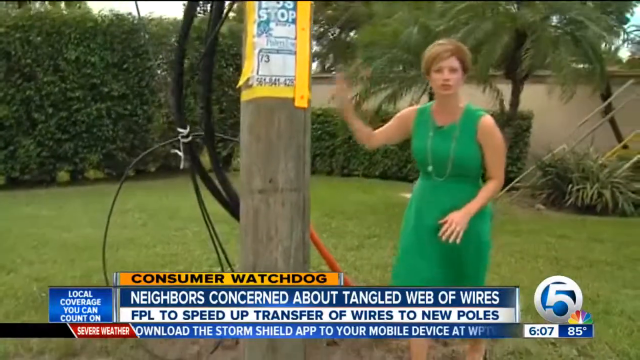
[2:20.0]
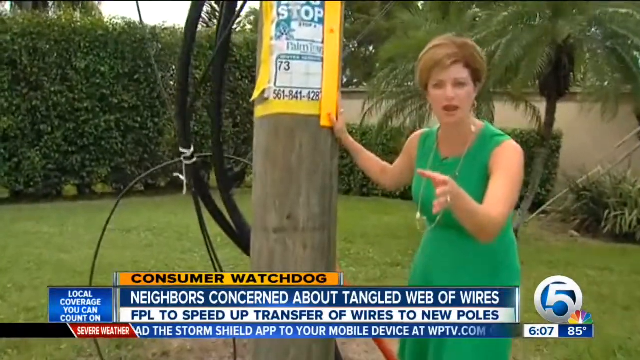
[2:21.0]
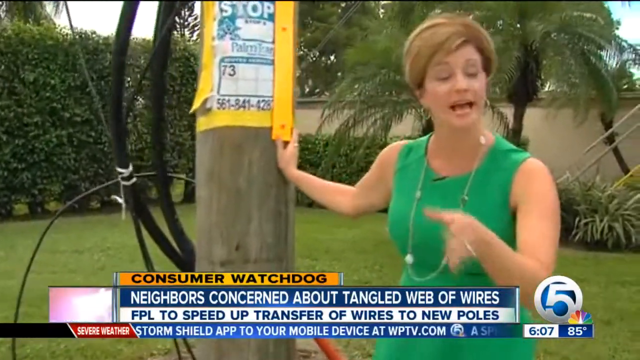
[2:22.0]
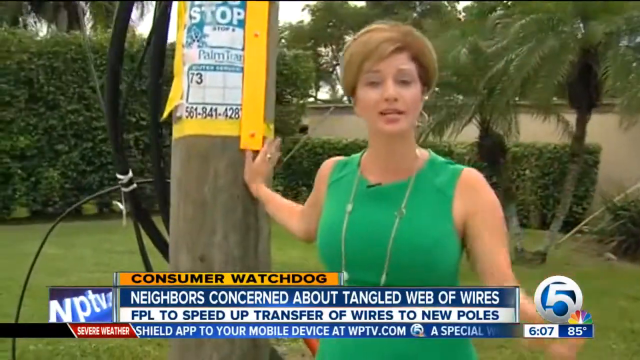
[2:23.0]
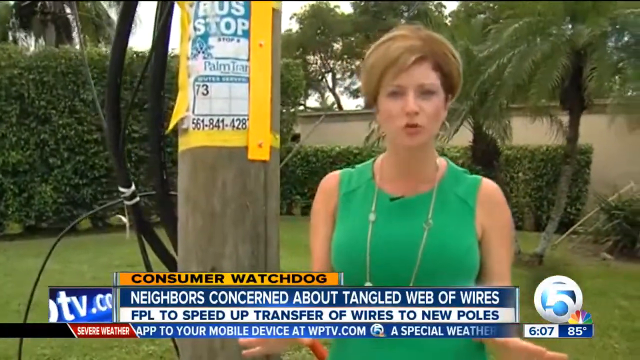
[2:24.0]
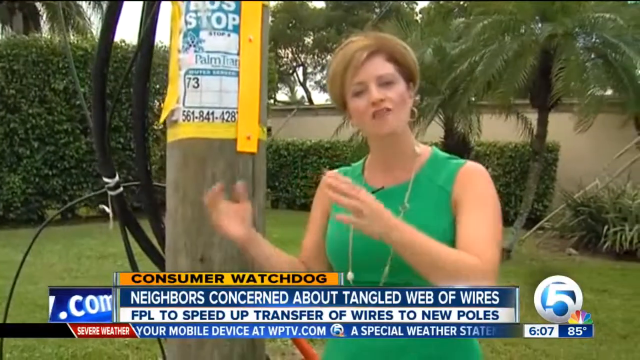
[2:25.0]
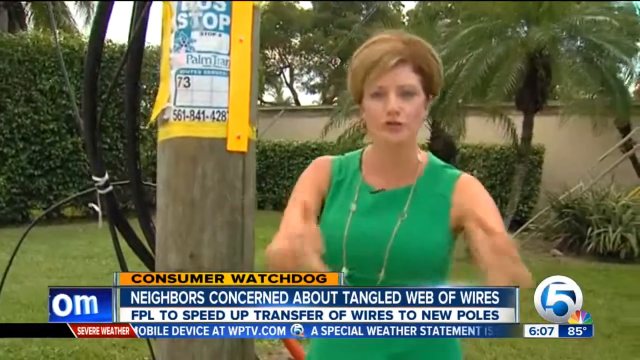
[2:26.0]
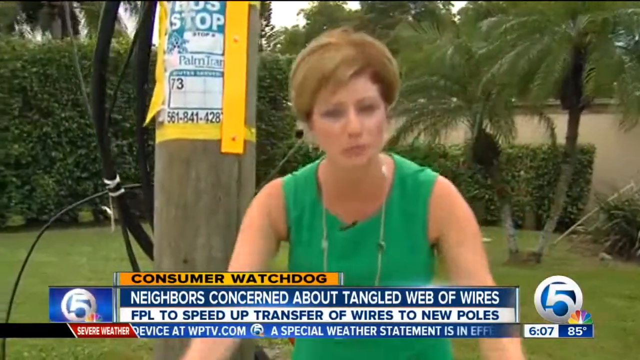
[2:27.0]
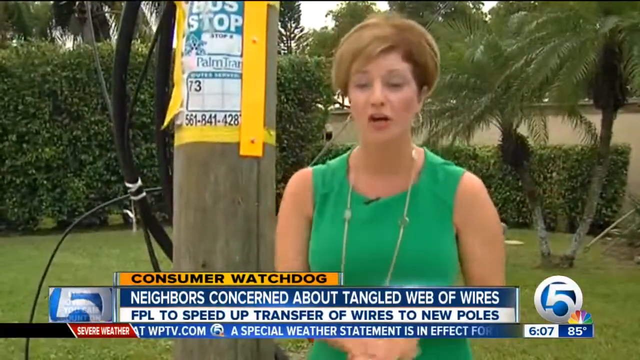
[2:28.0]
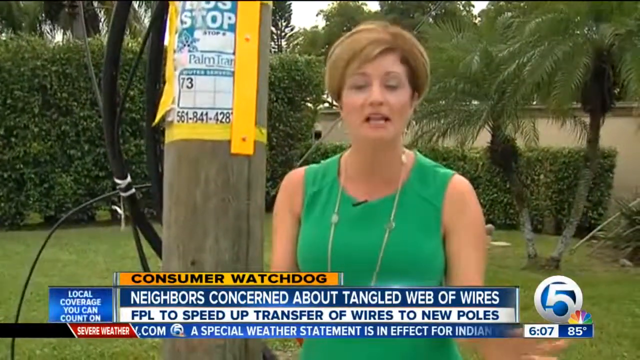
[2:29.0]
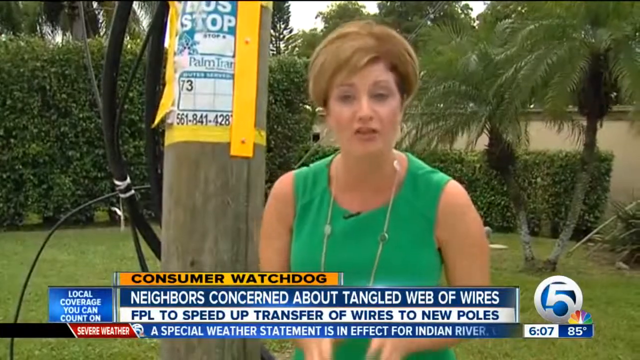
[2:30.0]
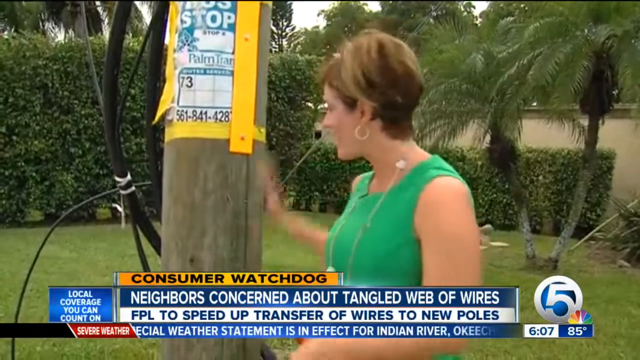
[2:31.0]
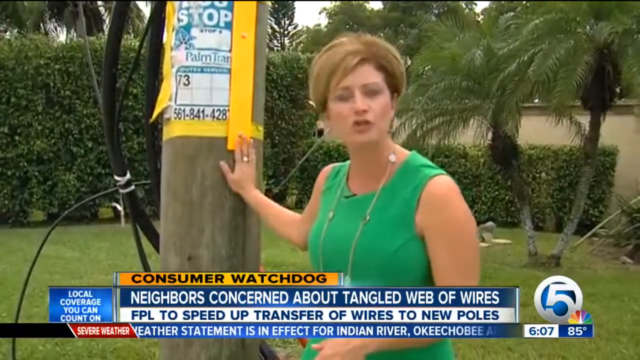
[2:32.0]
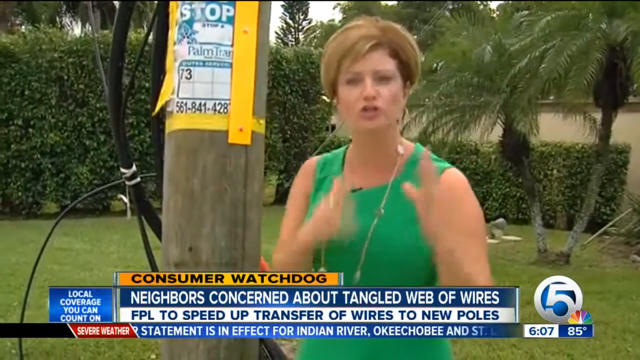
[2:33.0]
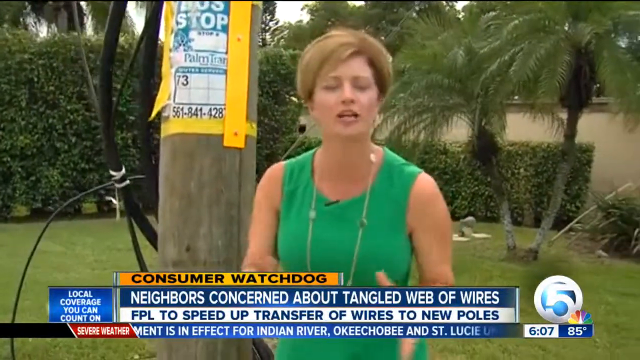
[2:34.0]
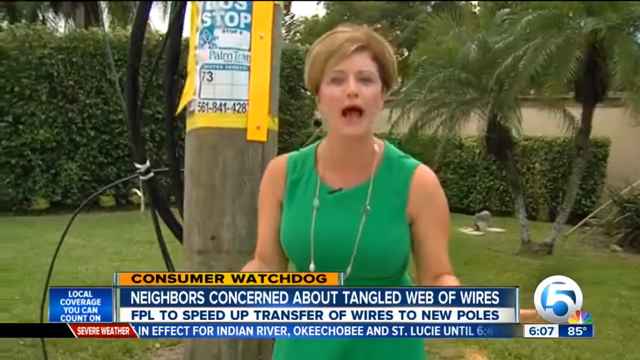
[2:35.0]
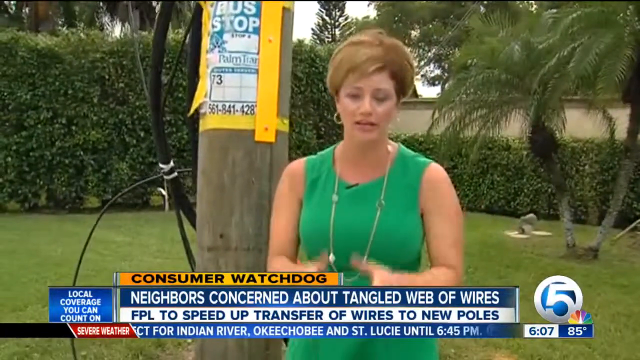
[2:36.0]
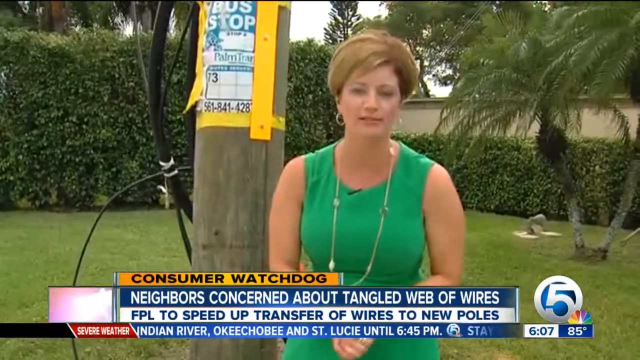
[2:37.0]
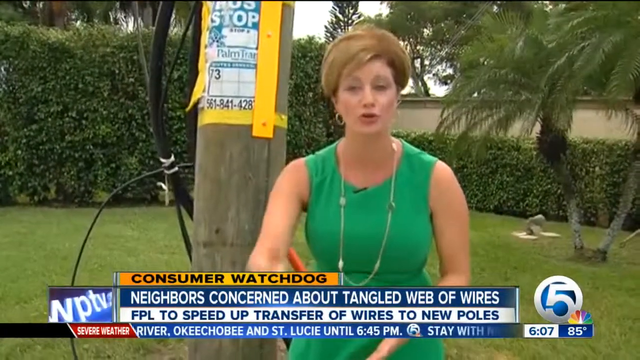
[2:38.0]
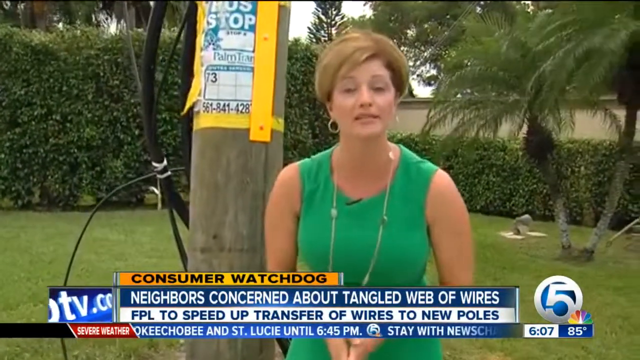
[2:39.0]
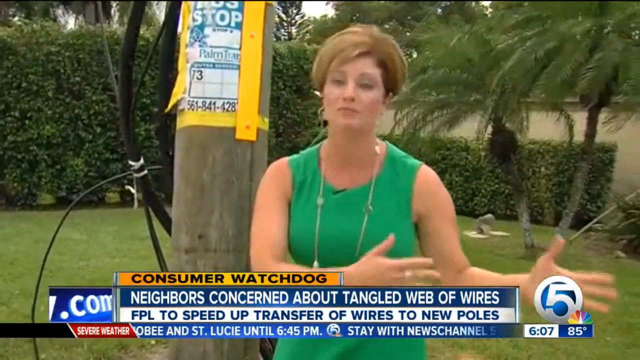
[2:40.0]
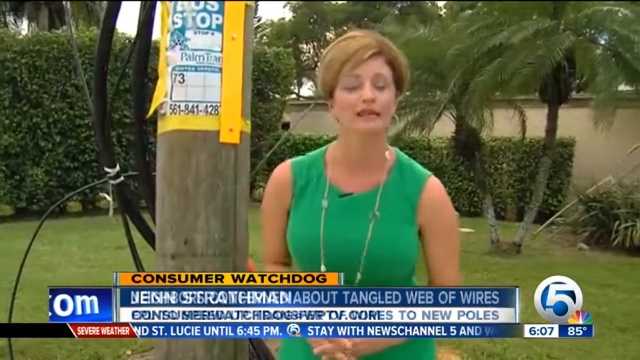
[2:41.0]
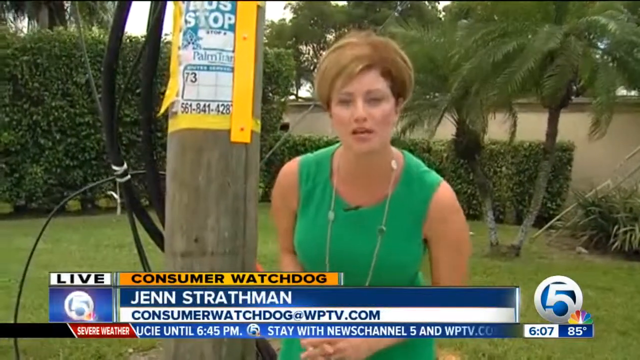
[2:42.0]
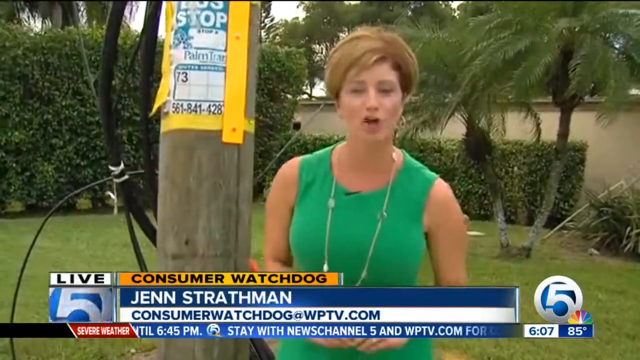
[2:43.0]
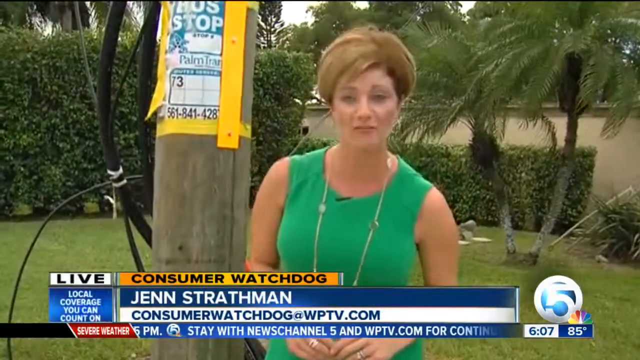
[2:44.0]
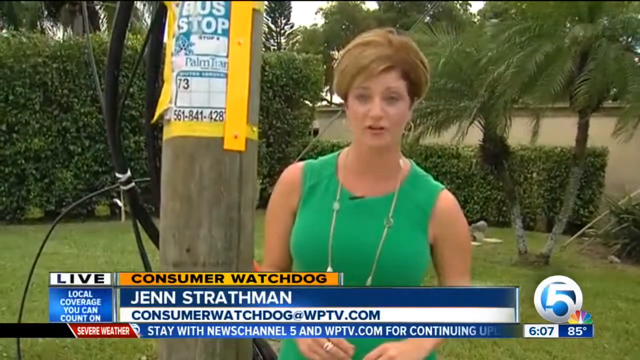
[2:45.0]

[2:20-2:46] The reporter looks at the camera and speaks, with her right hand on the telephone pole and her other hand pointing or directed at the camera. She then takes both hands off, moving her hands left to right and nodding as she speaks. She looks back at the pole for a moment, puts her right hand back on it, removes it, and again moves her hands back and forth, almost in a motion of disagreement. She continues speaking into the camera for a few more seconds. Briefly, what looks like a newsroom appears, with two reporters sitting at a desk looking at the camera. On the left there is text that says "local coverage", and on the lower right-hand side there is a circle with the number five in it, suggesting possibly a local station number five.